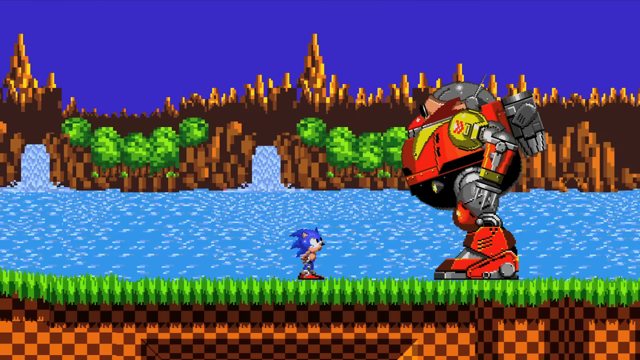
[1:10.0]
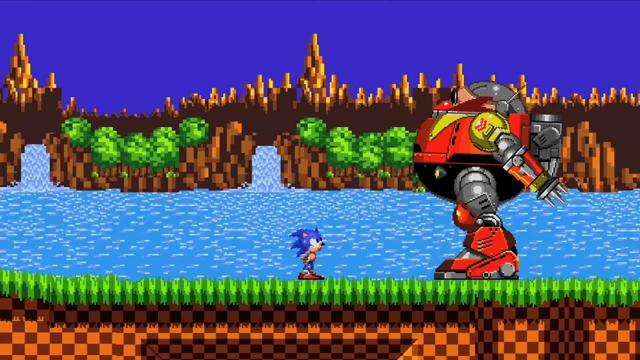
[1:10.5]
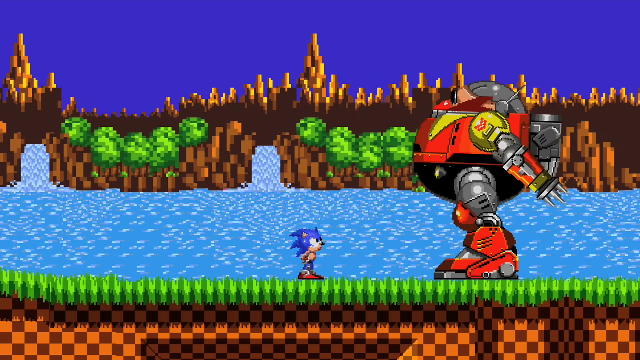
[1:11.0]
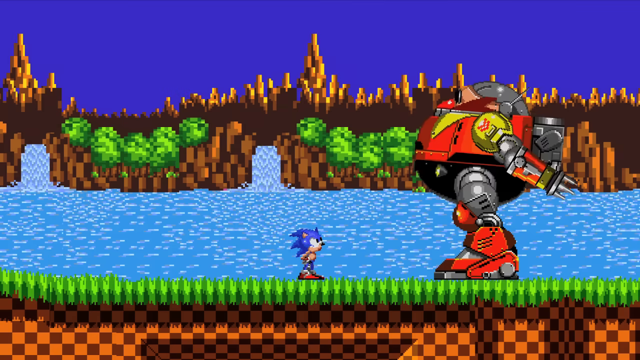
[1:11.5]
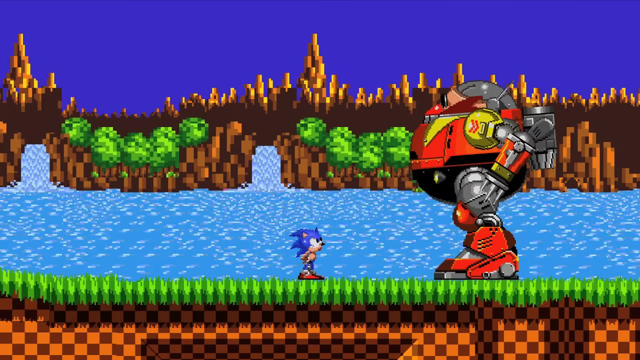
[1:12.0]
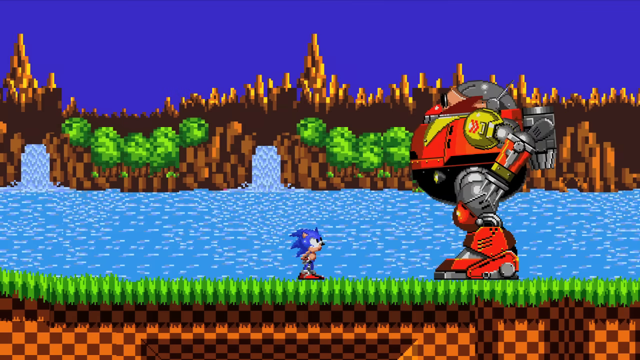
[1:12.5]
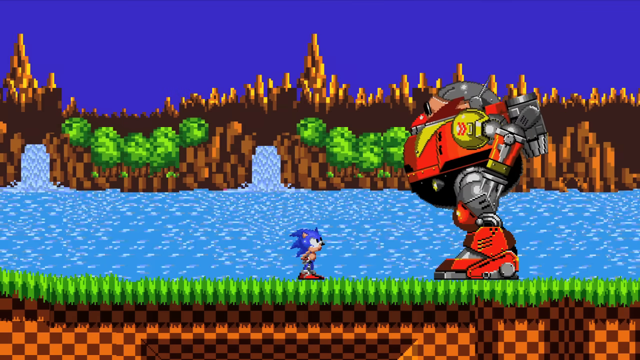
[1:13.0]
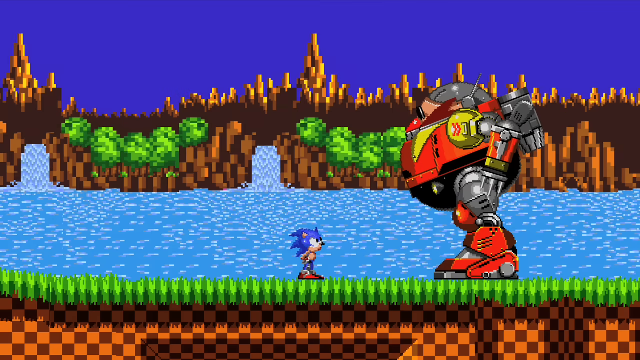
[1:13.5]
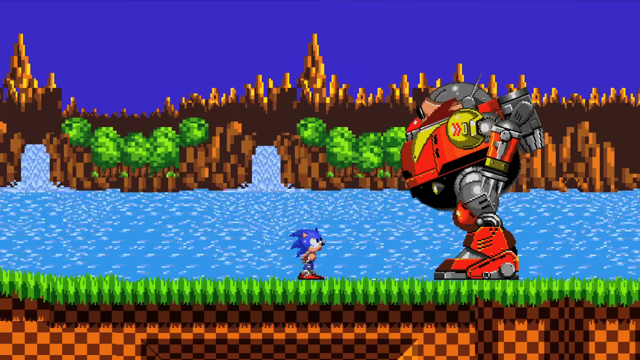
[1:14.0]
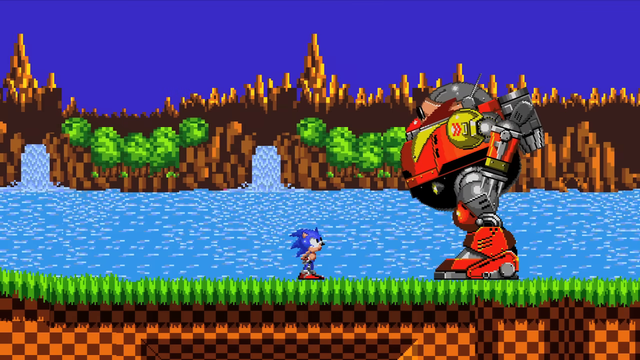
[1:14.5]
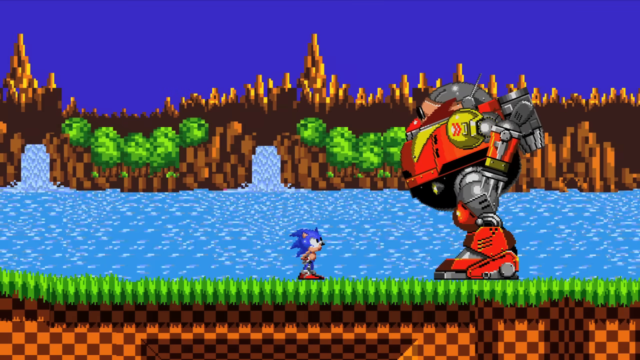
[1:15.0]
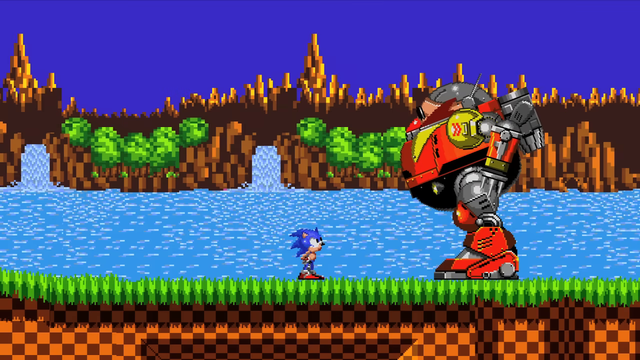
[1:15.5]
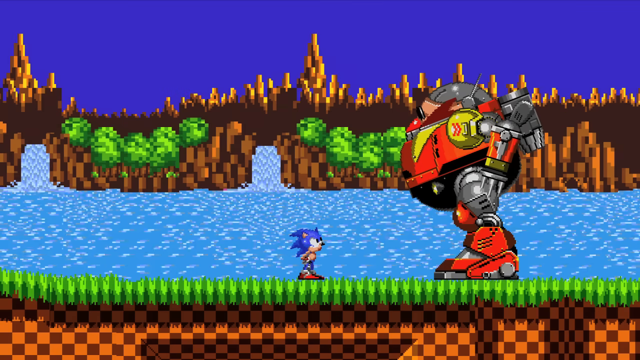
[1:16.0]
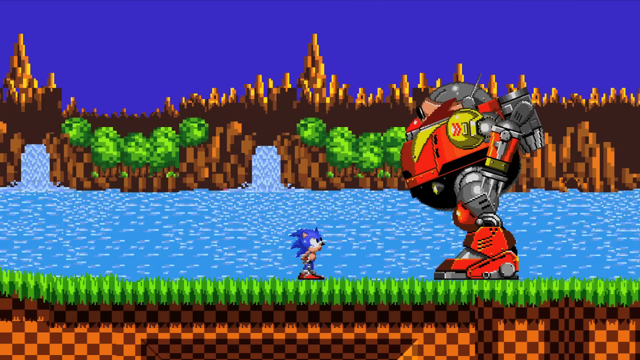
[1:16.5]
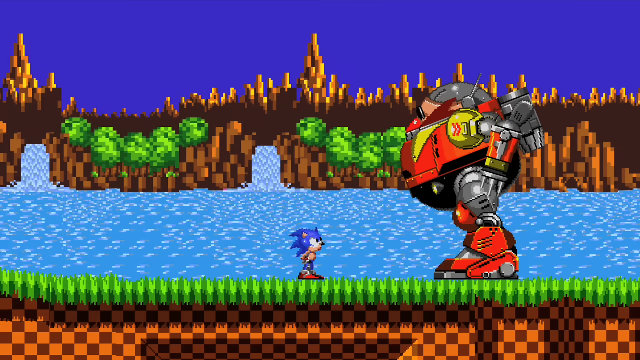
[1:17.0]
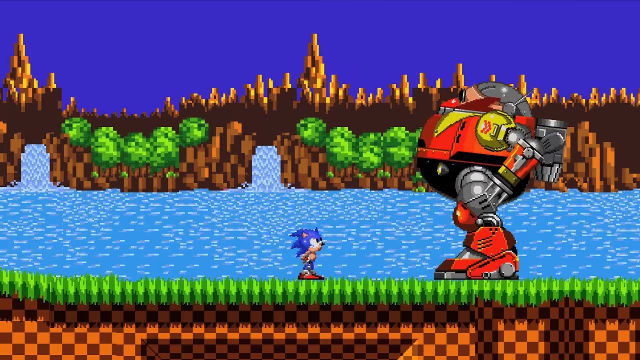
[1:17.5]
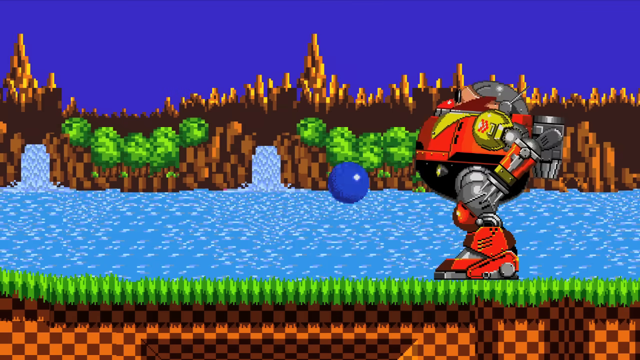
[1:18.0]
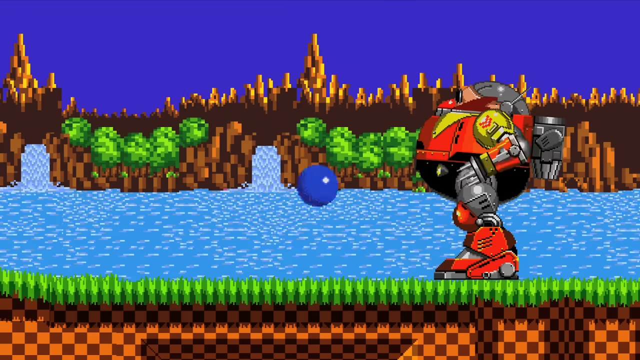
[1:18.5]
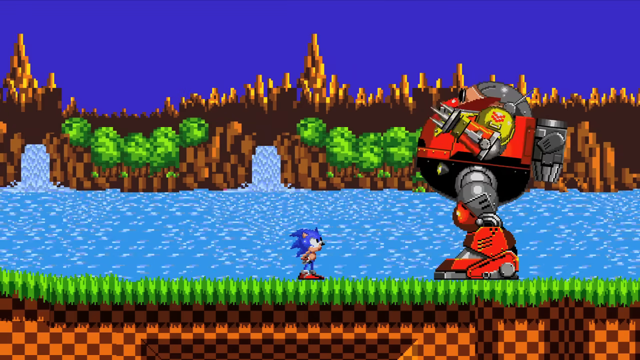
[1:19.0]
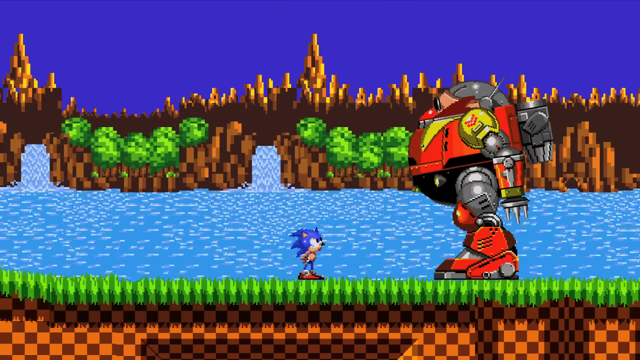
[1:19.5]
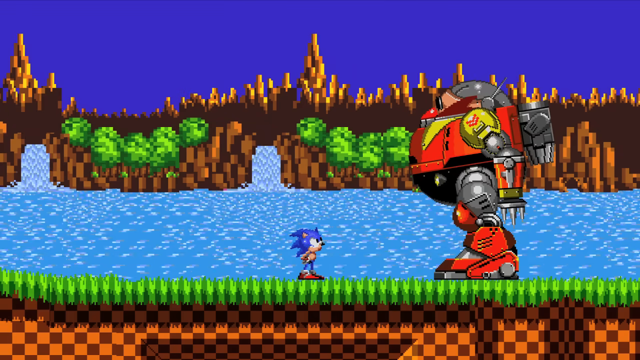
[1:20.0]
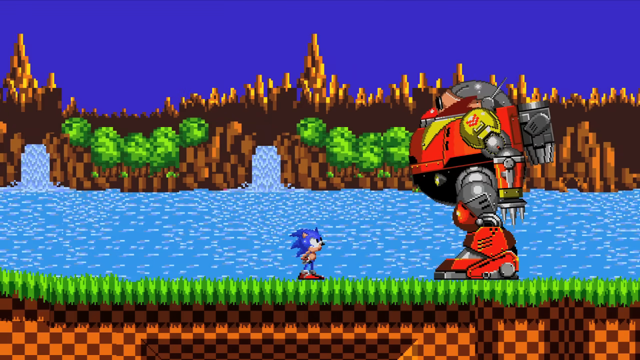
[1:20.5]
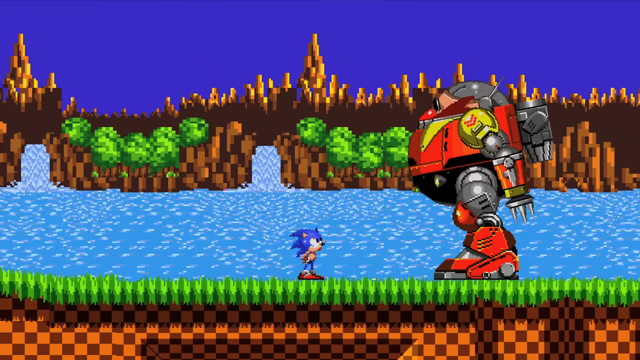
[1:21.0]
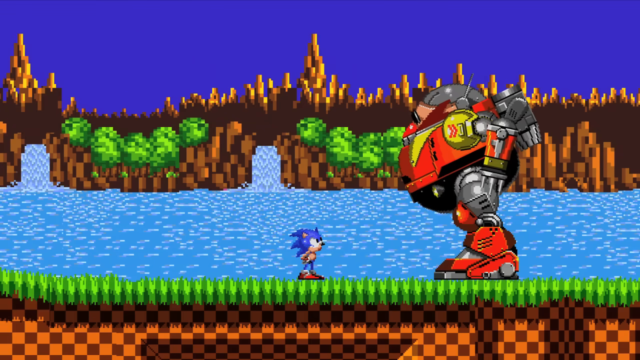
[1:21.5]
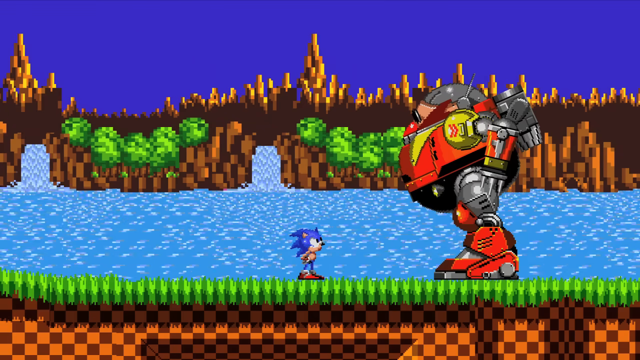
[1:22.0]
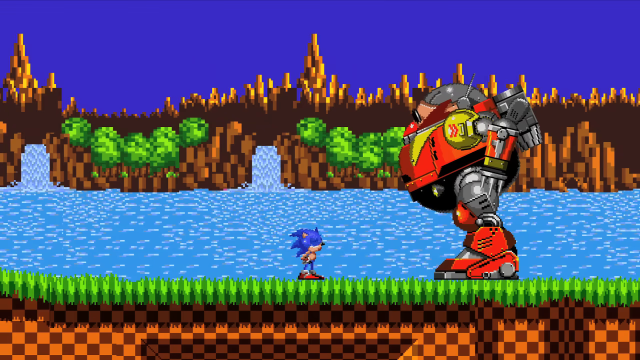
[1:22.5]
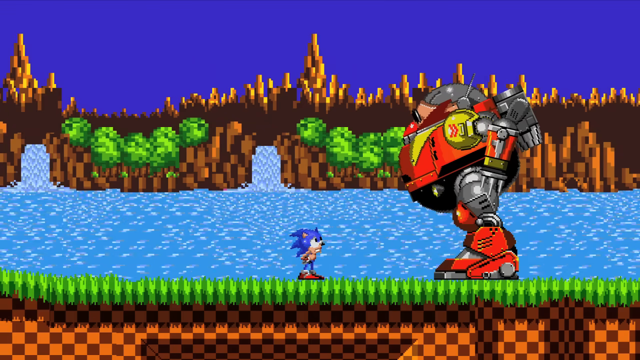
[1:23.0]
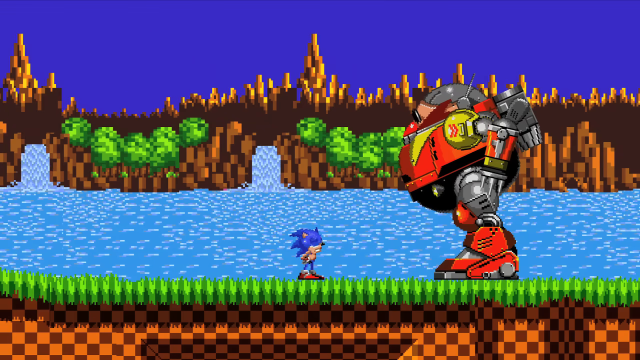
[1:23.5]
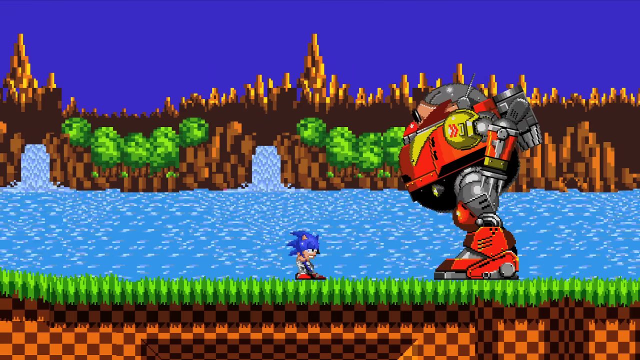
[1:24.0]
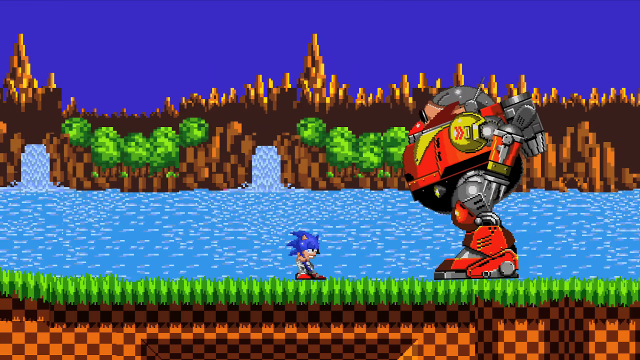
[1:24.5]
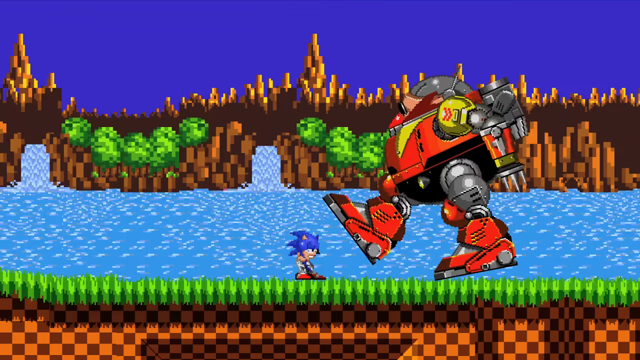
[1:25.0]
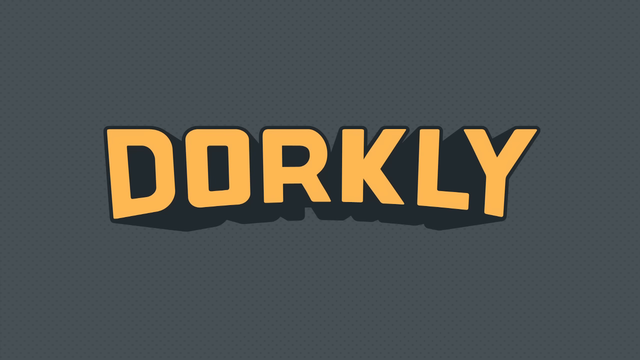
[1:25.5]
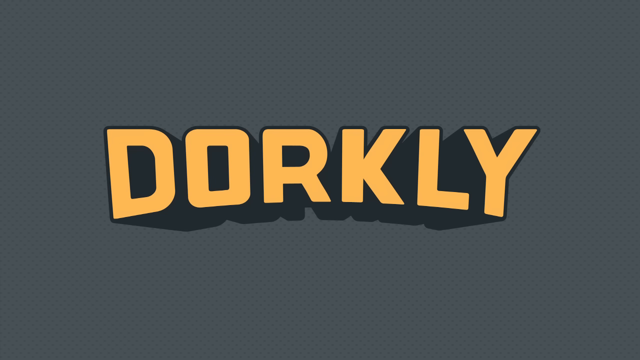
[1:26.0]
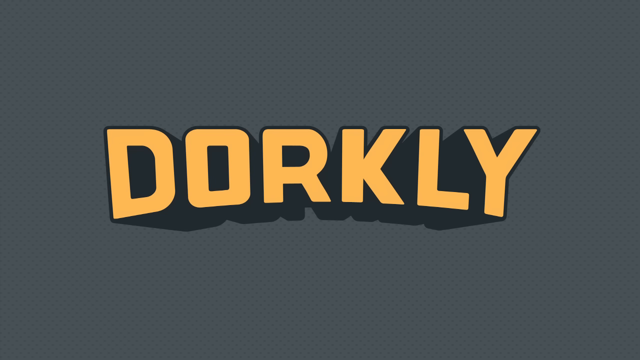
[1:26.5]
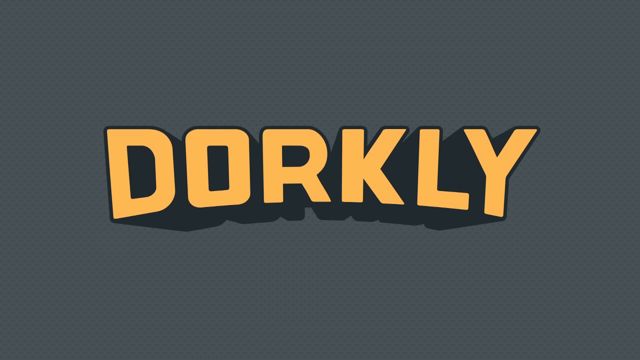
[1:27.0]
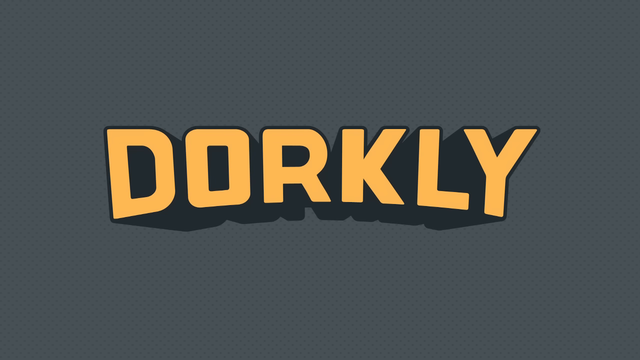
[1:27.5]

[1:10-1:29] Sonic the Hedgehog is next to a very big character, much taller than him, that looks machine-like and has a machine-like stance. The machine is yellow, red and gray. In the background are plenty of artificial trees, mountains and a watery lake. Sonic and the machine-like character are both standing on top of a grass type of structure. Sonic rolls up into a ball and goes toward the machine-like character, which lifts its right foot, attempting to step on him. The video then shows a completely gray background with the word "dorkly" in orange in the middle of the screen, followed by a completely gray background as the video ends.